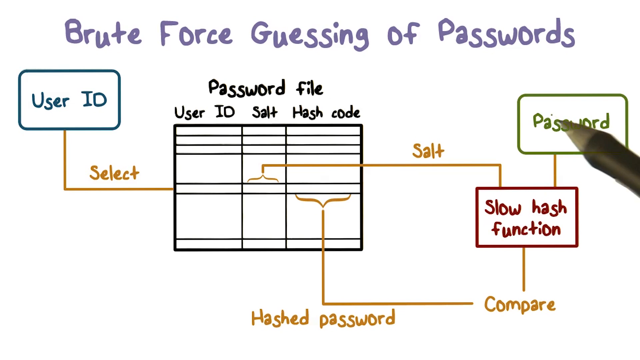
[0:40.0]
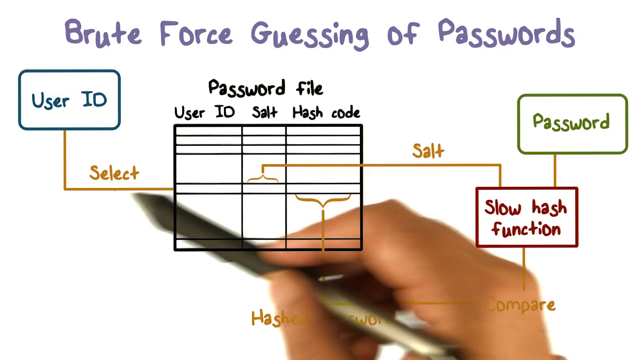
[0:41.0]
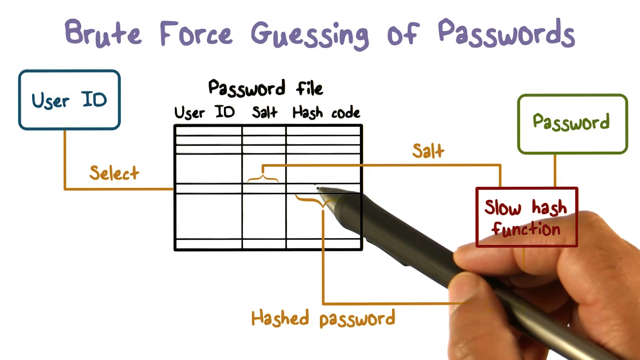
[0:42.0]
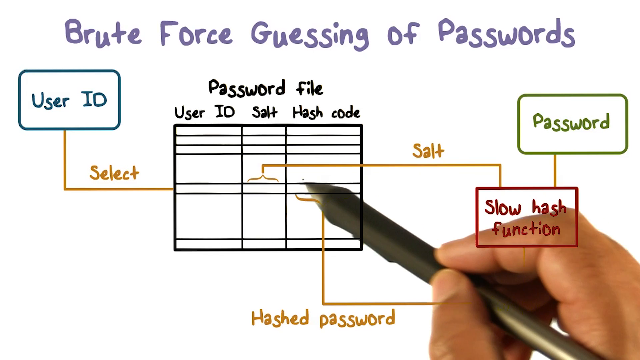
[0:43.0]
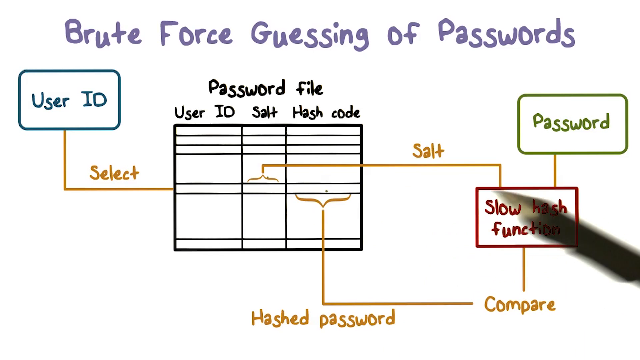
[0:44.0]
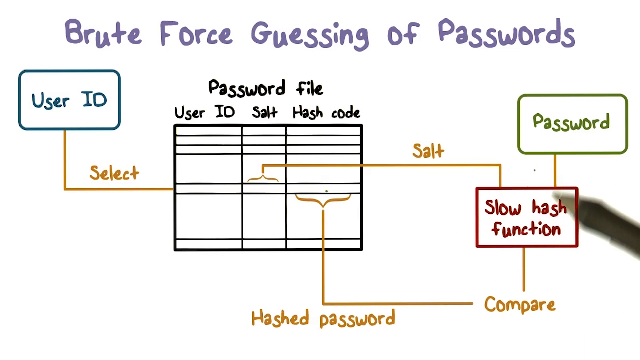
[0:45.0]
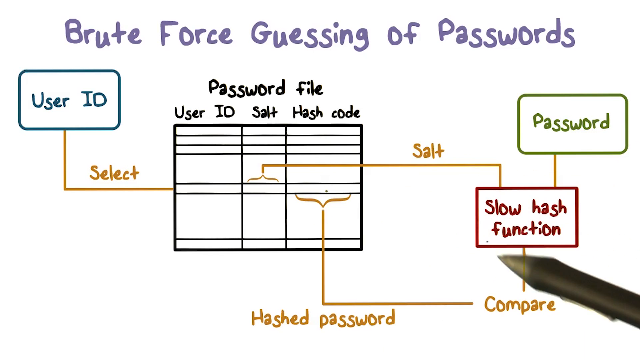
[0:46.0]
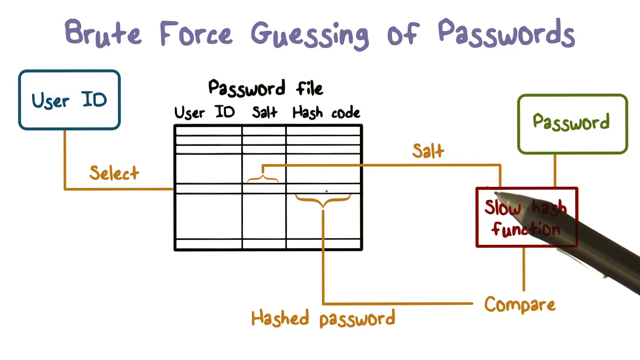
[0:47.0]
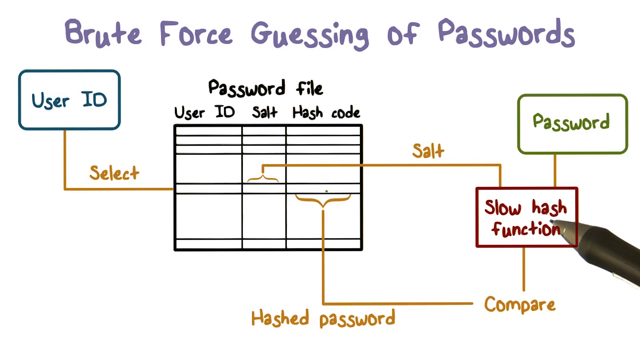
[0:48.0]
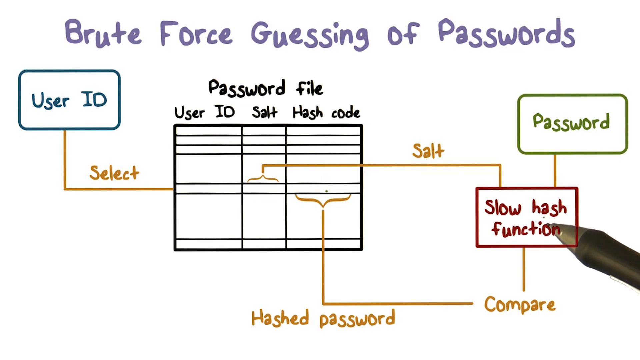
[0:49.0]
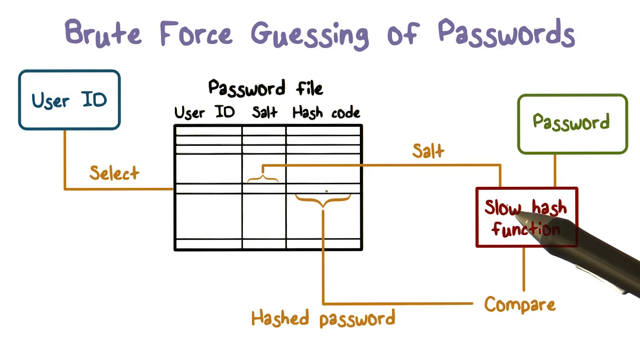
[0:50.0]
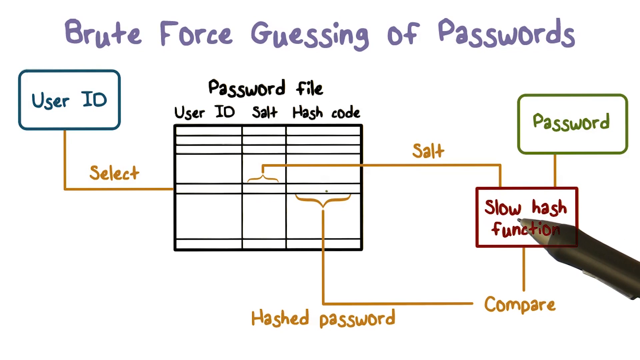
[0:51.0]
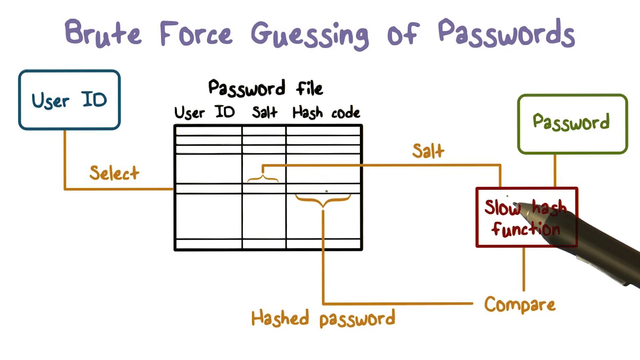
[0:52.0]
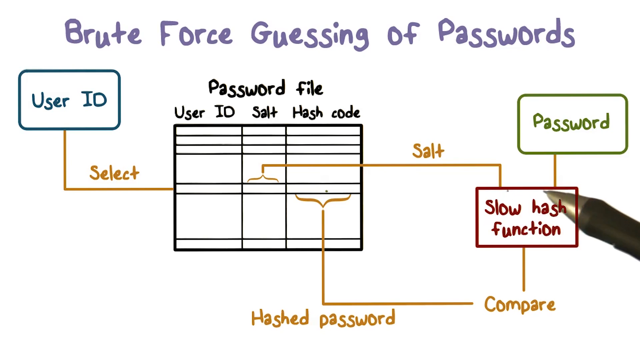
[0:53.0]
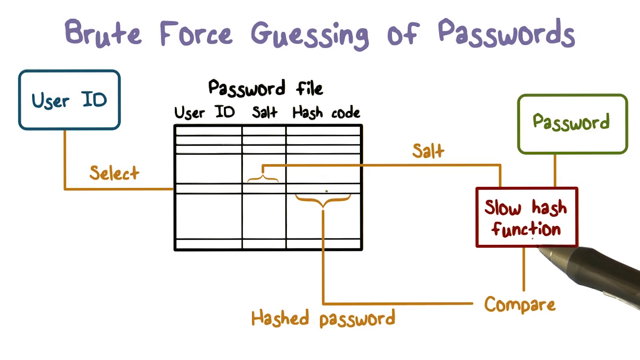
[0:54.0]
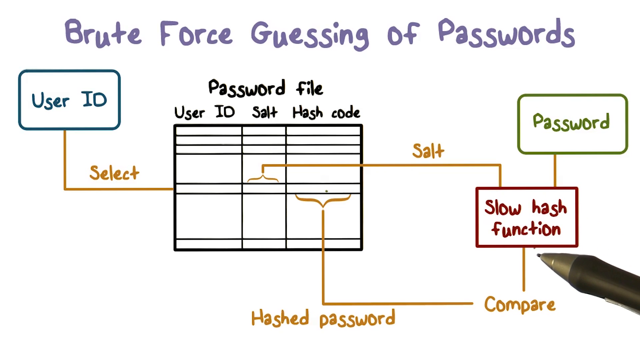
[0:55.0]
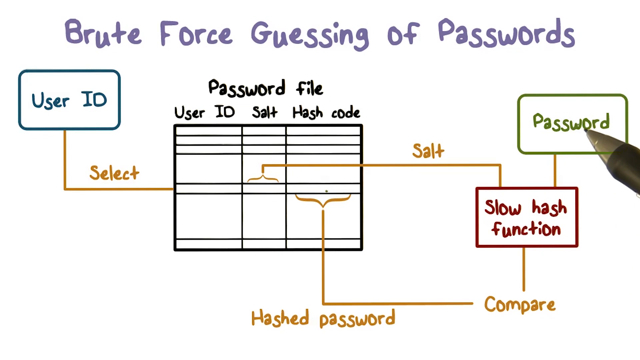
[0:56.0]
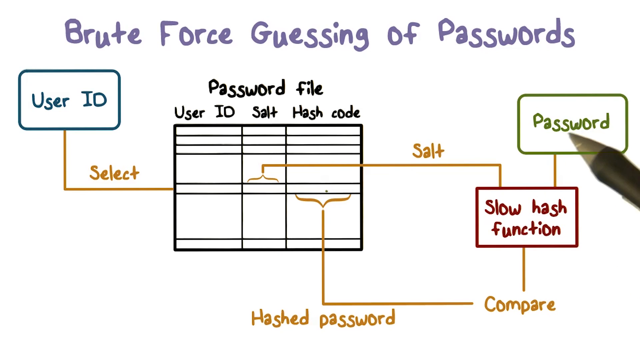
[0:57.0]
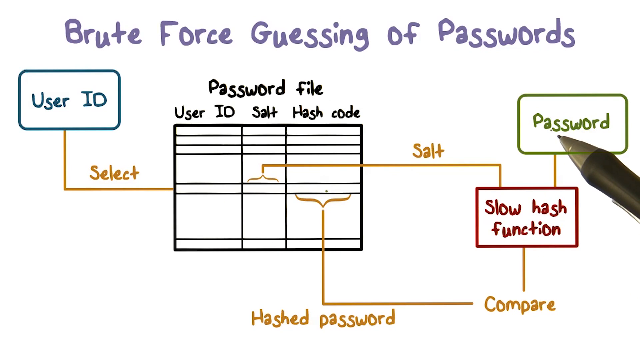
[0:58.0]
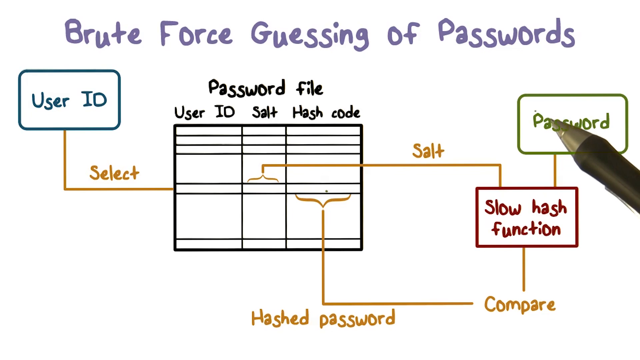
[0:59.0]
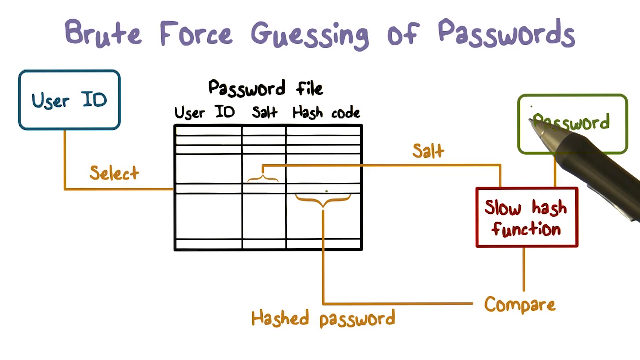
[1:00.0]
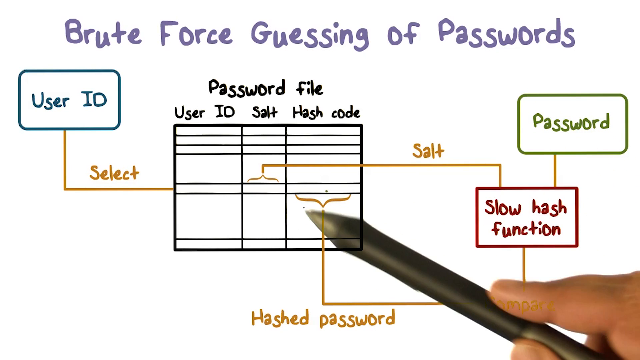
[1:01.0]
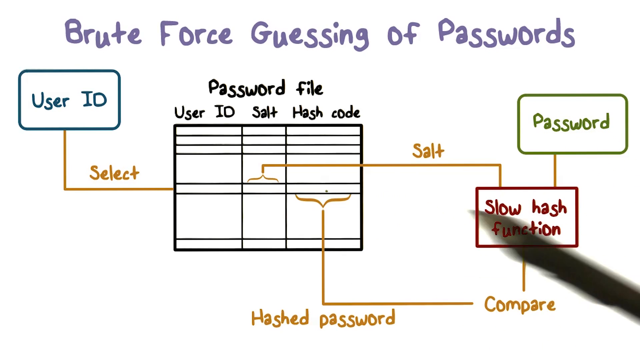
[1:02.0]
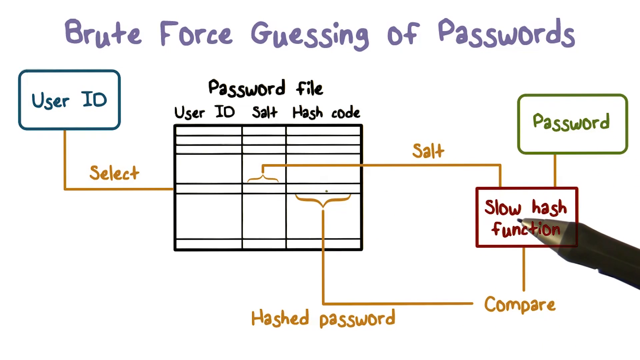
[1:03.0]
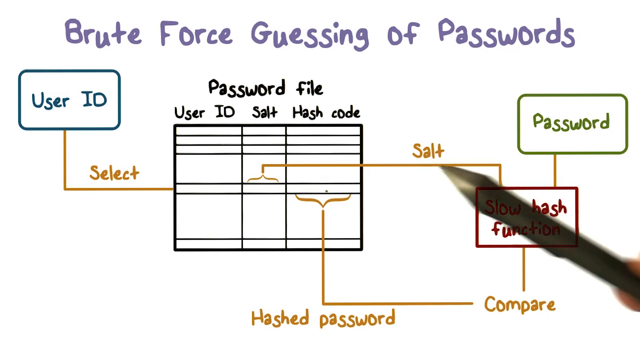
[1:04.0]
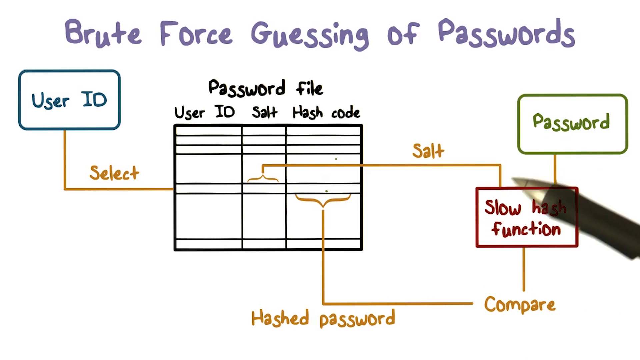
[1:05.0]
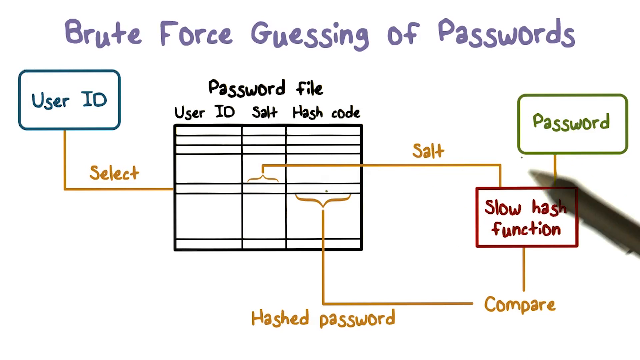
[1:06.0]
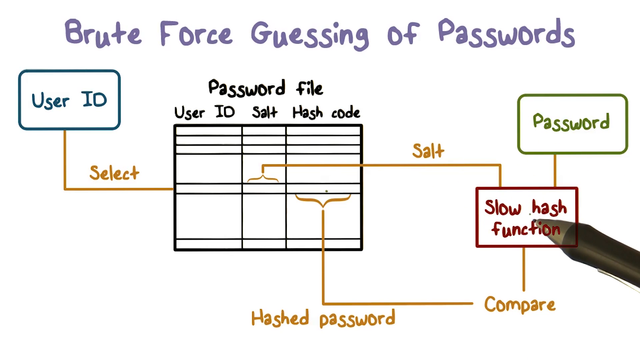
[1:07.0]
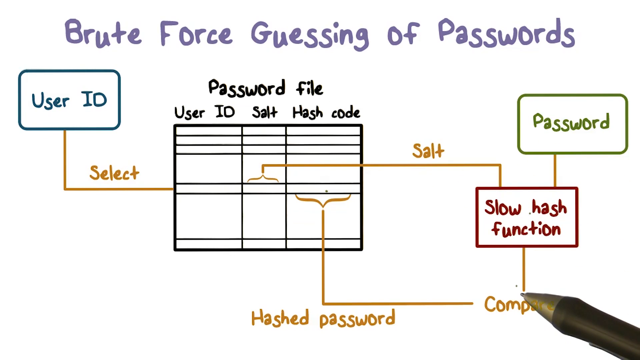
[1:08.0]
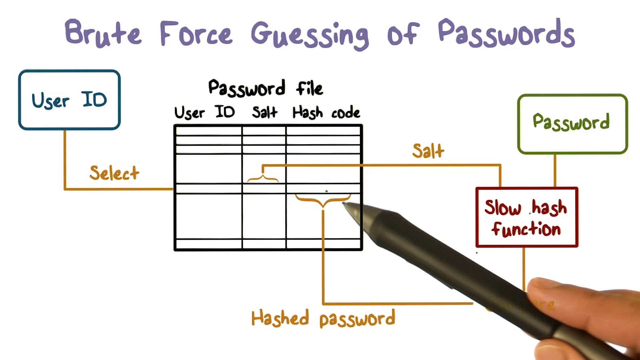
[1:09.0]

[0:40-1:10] The white presentation screen titled "Brute Force Guessing of Passwords" shows the data table in the center left, titled "Password File," with three distinct columns, user ID first and hash code last. Call-out boxes show the user ID being selected from the data table and the input from the second and third columns being compared to get the output of the password. The presenter's ballpoint pen begins hovering over the word "password," then traces how the flowchart works: pointing to where the user ID is input, then the information from the second and third columns combined in the slow hash function box, where the two values are compared, with the password as the output. The password box is outlined in green and the word "password" is green, the user ID is blue, and the flowchart's words and all the lines connecting the different colored boxes are yellow.